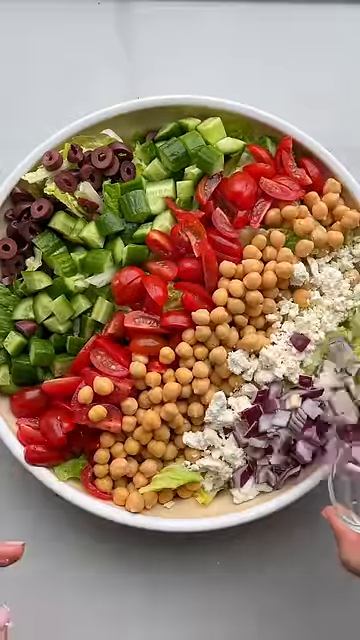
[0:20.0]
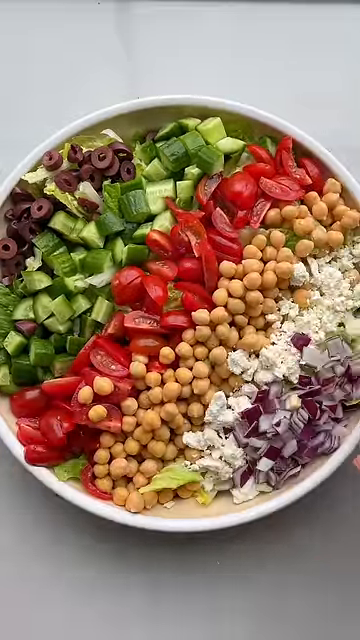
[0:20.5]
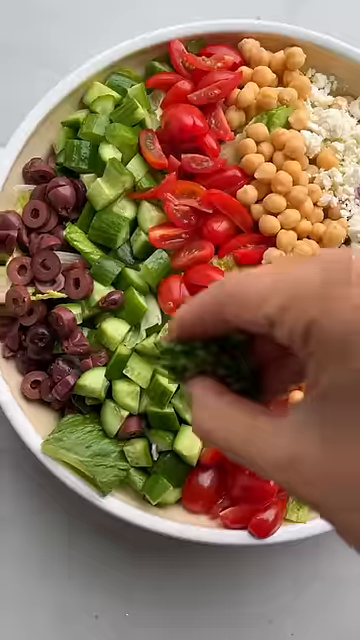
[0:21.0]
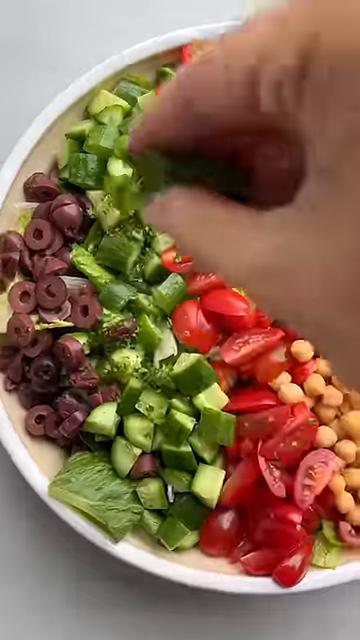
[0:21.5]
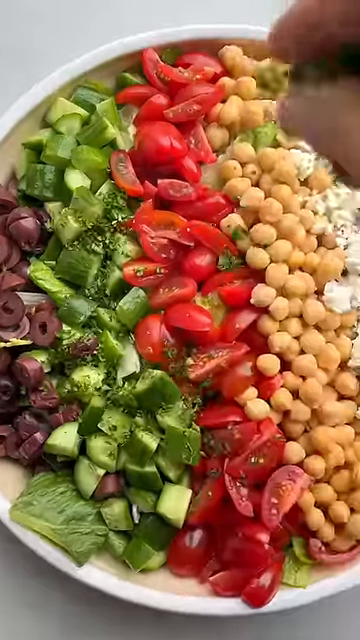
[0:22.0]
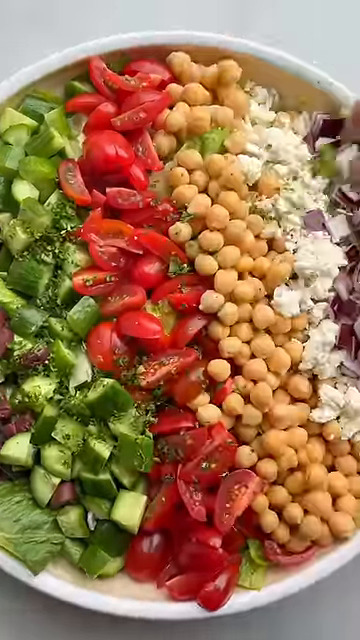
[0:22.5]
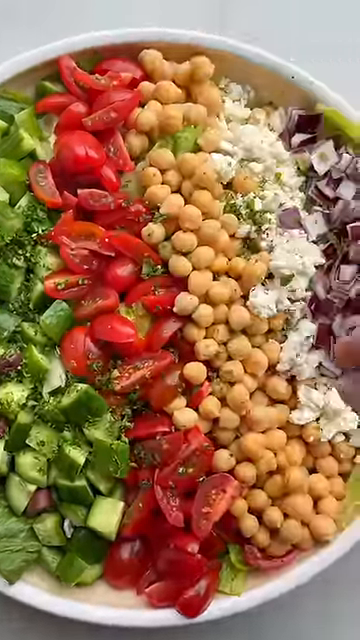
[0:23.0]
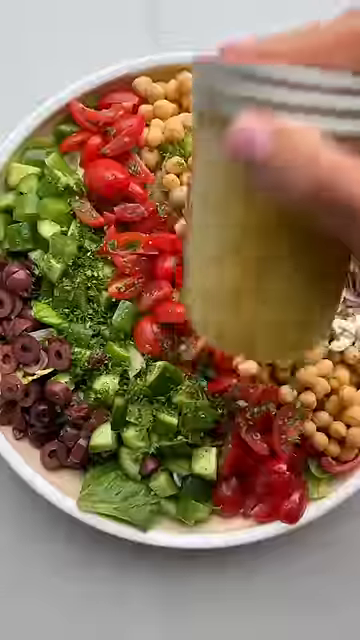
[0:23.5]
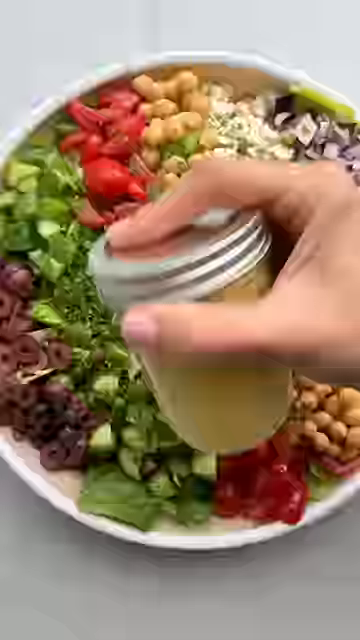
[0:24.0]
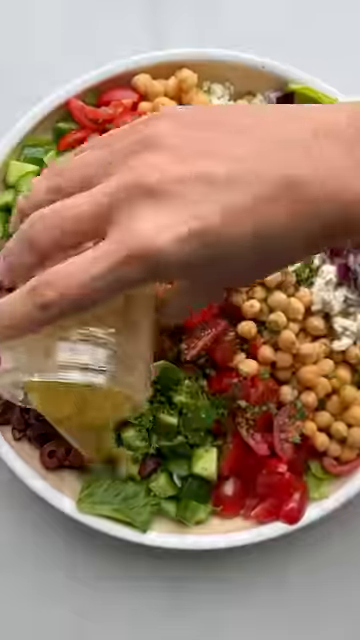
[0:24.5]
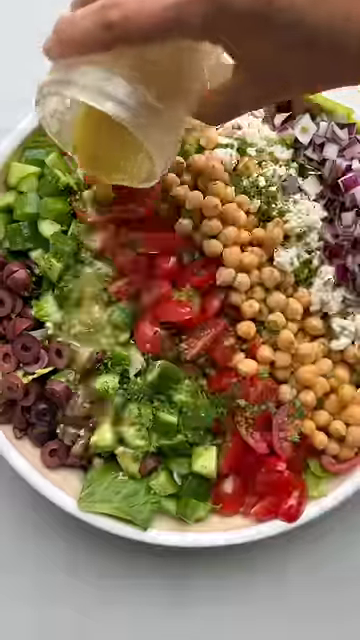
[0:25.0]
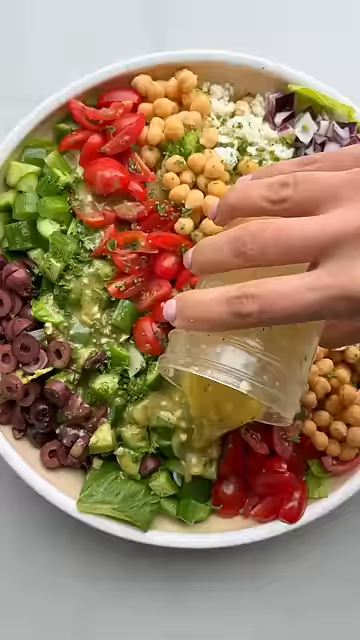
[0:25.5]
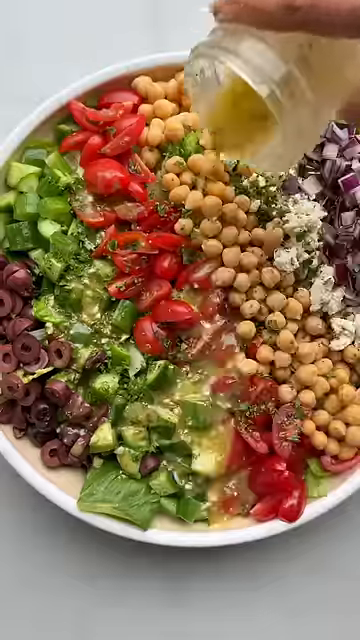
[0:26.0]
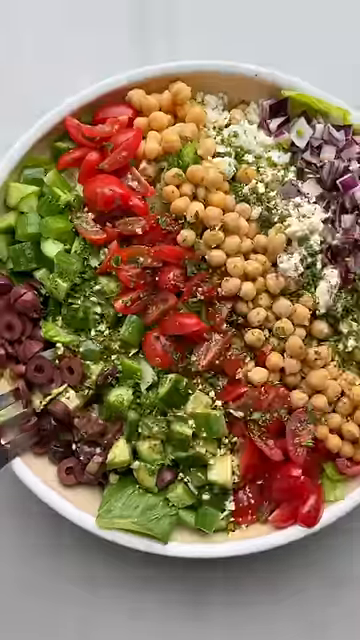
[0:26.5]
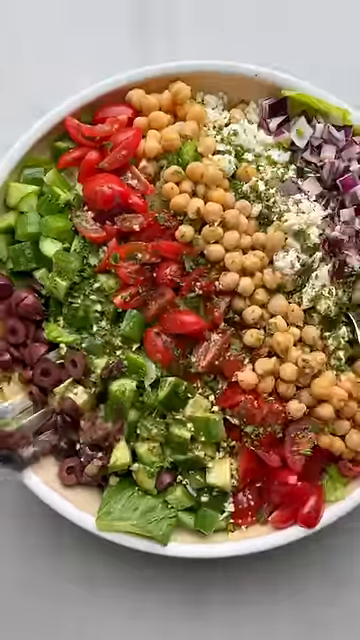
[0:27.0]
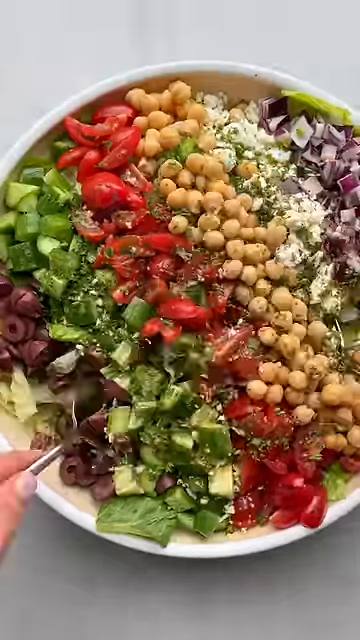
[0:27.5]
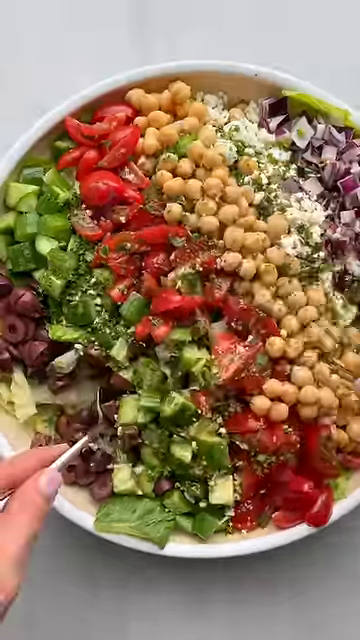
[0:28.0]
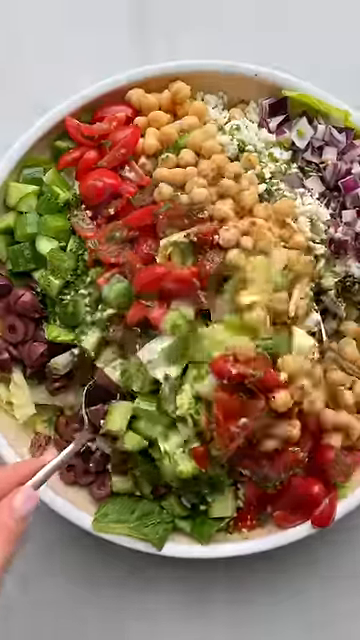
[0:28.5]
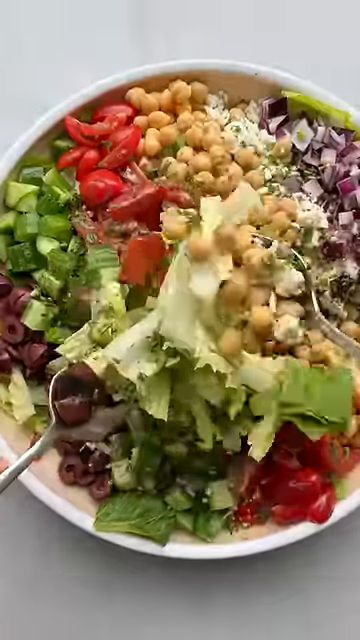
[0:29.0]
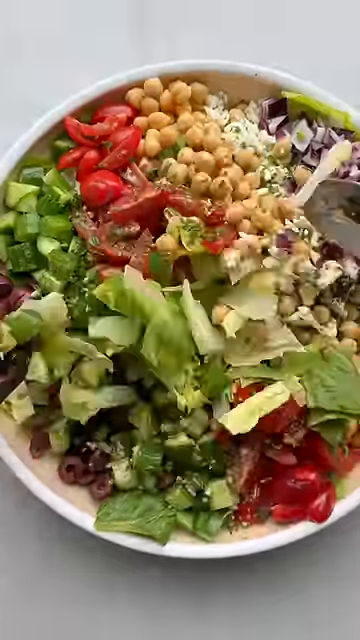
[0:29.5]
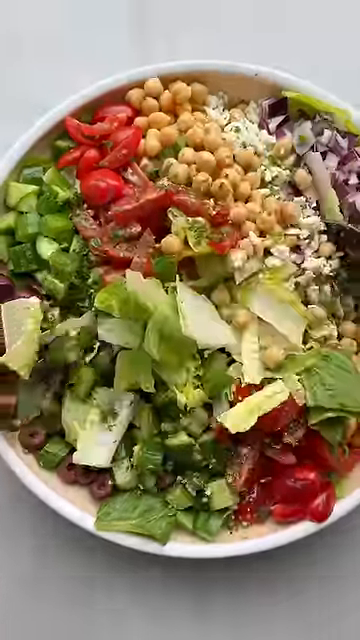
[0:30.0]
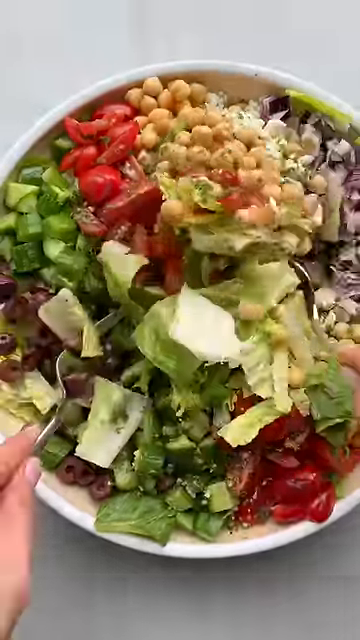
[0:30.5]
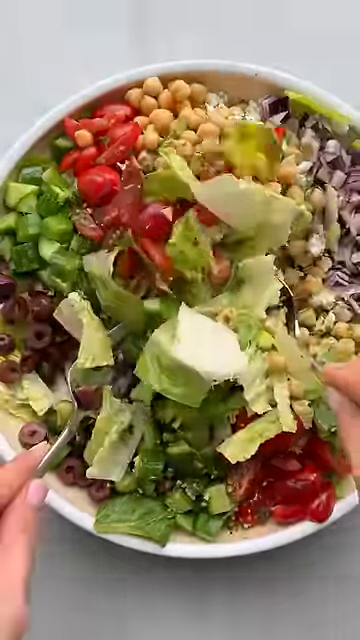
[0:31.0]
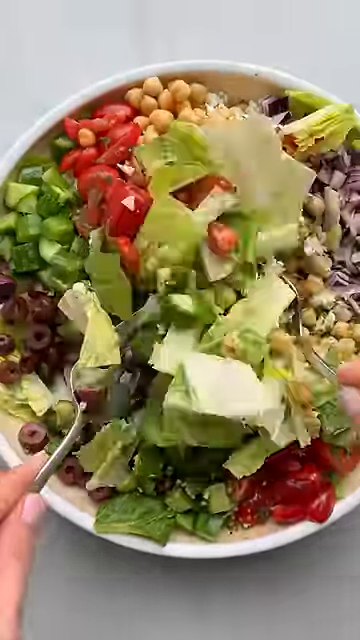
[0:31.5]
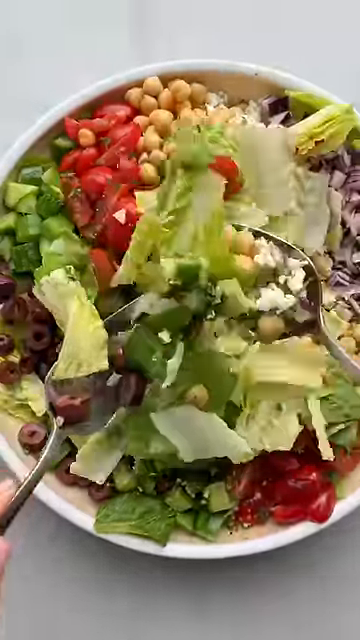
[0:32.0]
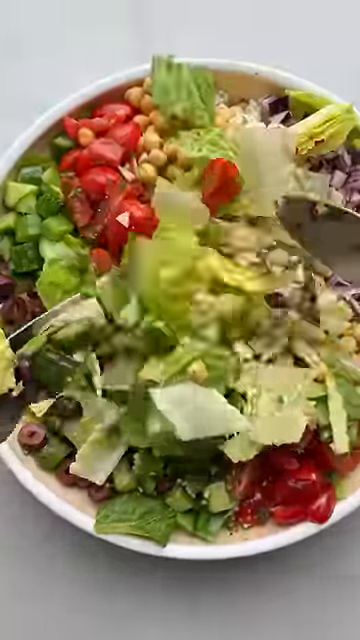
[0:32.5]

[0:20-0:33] This is a tutorial for the salad made for everyone who comes over. Seasonings are added, a bottle is shaken, and sauce is poured onto a salad containing chickpeas, grape tomatoes, cucumbers, olives, green pepper and red onions. Dressing is poured from a jar onto the salad, and the salad is tossed. A hand puts oregano or basil onto a salad of lettuce, green peppers, green onions, chickpeas and halved grape tomatoes, with chopped onions and olives. A hand adds seasonings and shakes a bottle, dressing is poured, and the salad is tossed with a fork and a spoon. A hand puts seasonings on a salad and shakes a bottle, and liquid is poured from a bottle onto the salad as it is tossed. The salad is lettuce, chickpeas, tomatoes and green peppers. A hand shakes a dressing, and the salad is tossed in a bowl on a table.